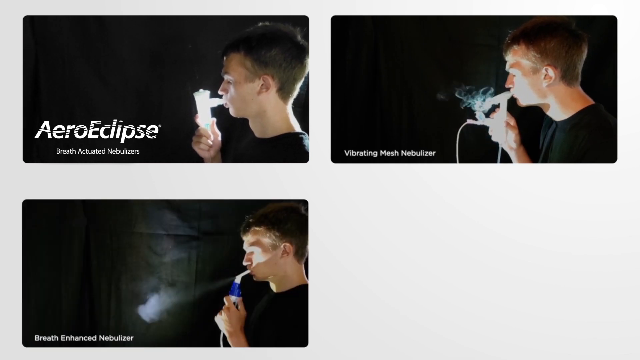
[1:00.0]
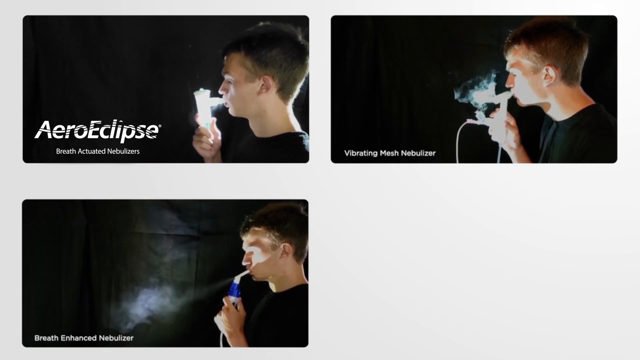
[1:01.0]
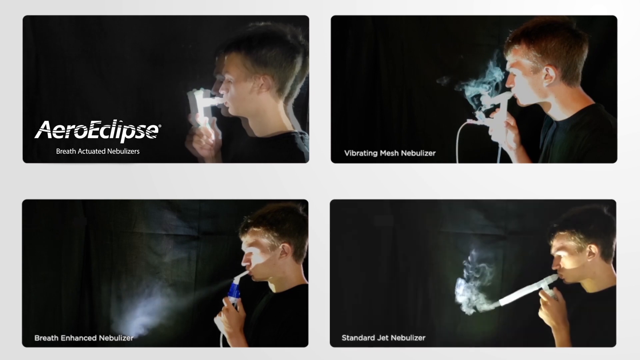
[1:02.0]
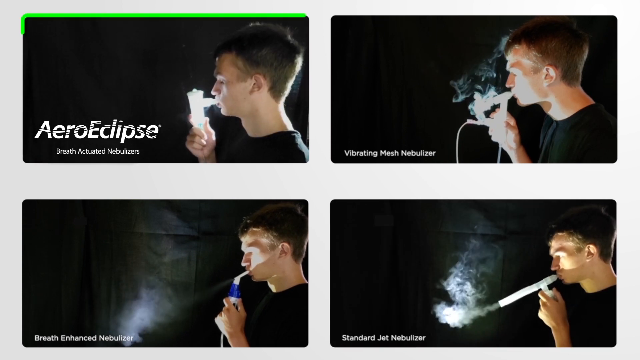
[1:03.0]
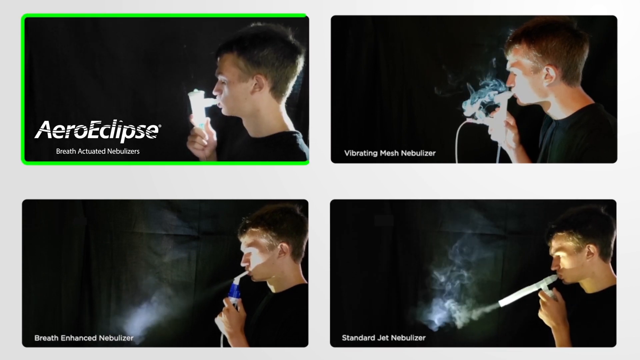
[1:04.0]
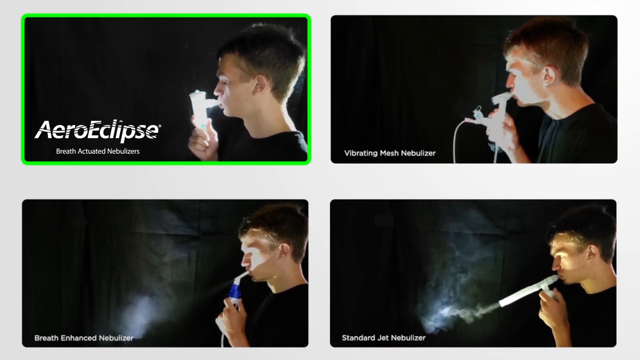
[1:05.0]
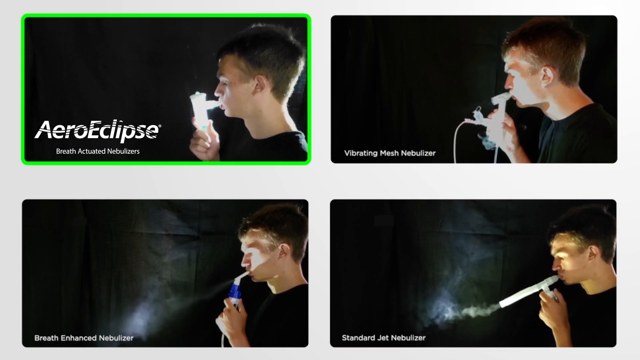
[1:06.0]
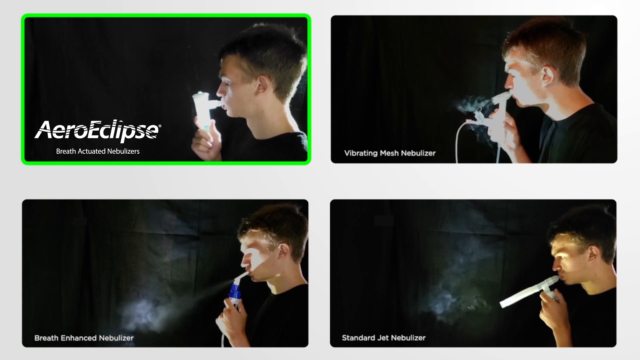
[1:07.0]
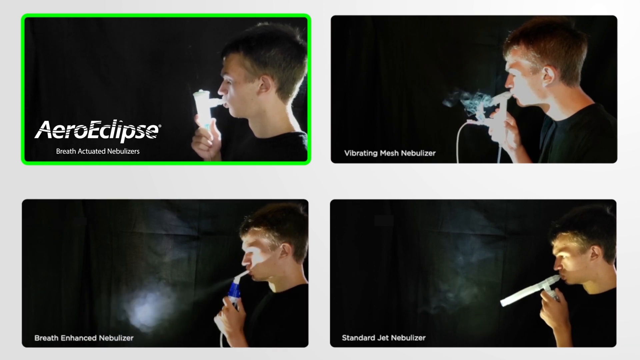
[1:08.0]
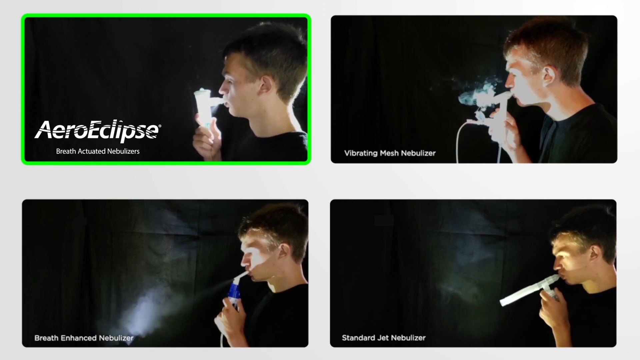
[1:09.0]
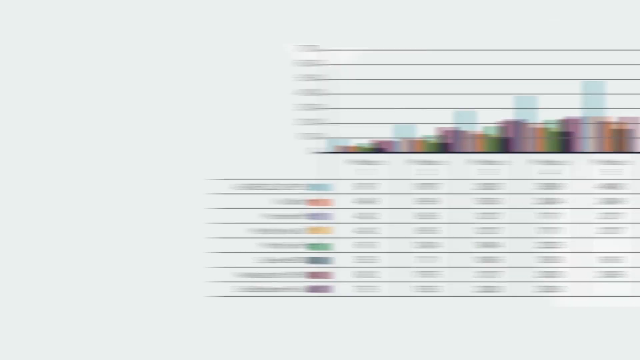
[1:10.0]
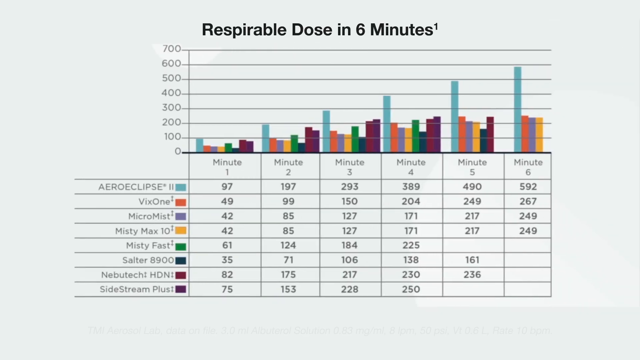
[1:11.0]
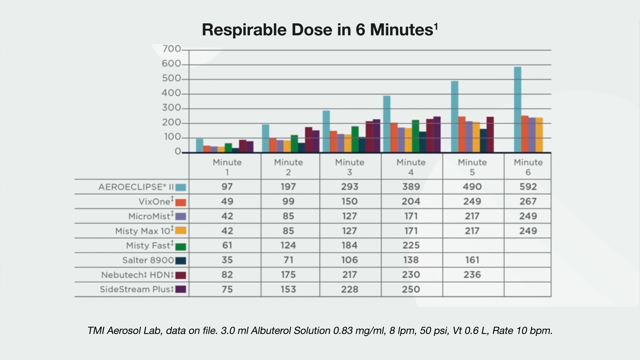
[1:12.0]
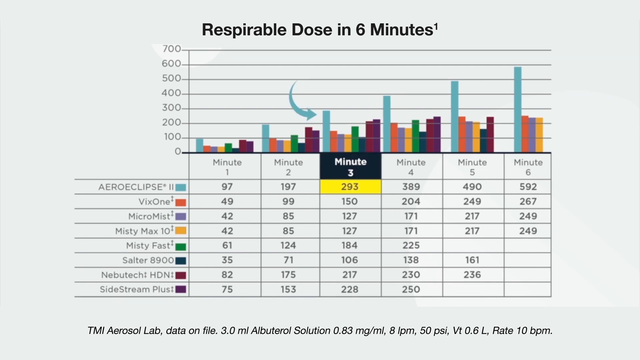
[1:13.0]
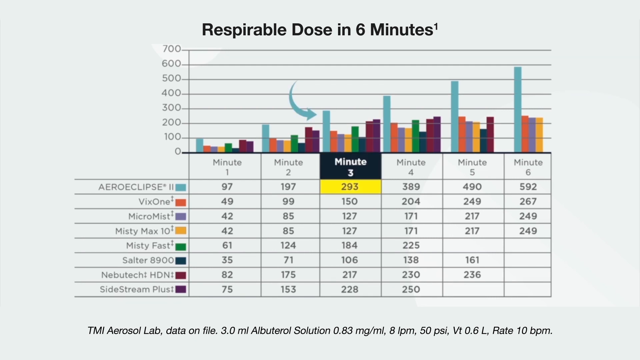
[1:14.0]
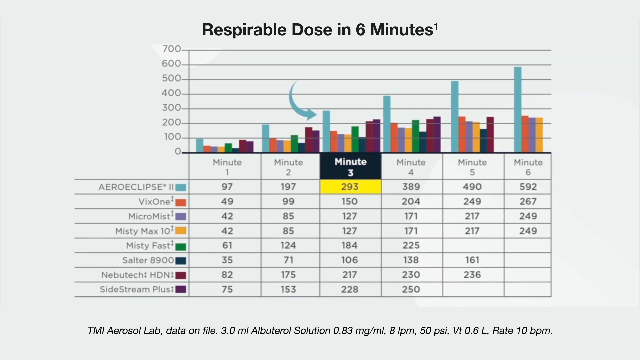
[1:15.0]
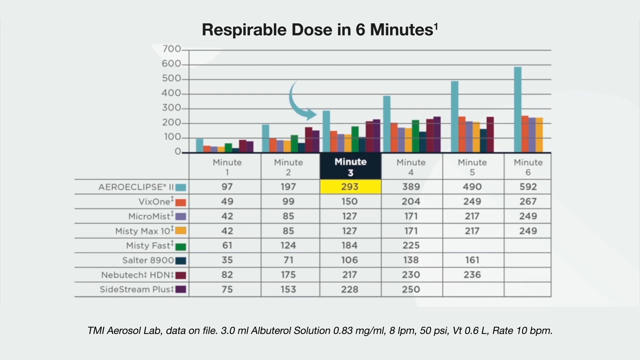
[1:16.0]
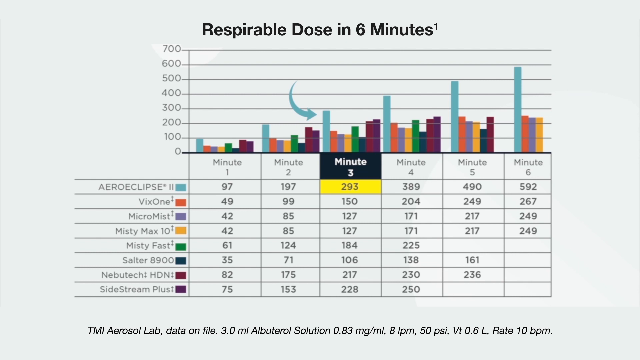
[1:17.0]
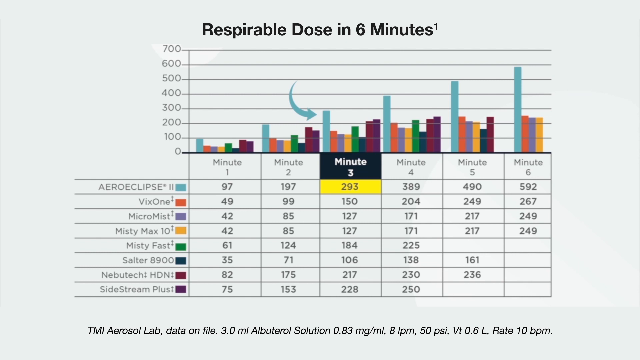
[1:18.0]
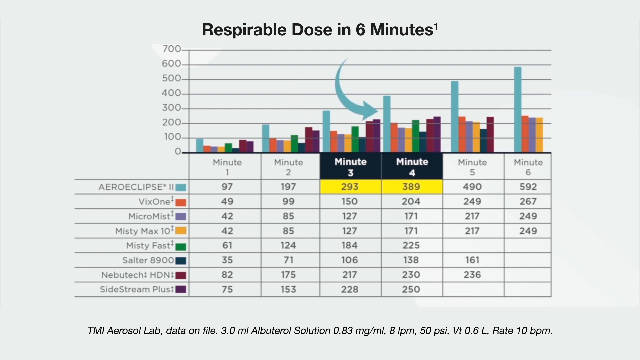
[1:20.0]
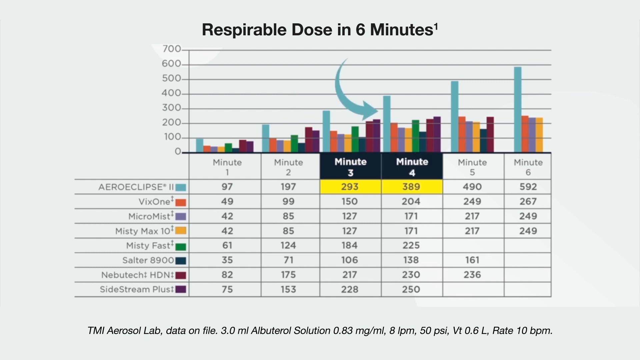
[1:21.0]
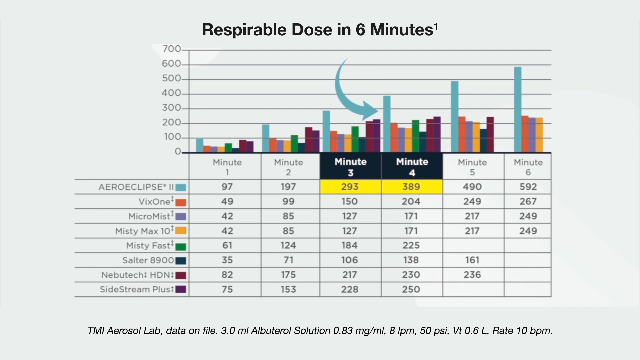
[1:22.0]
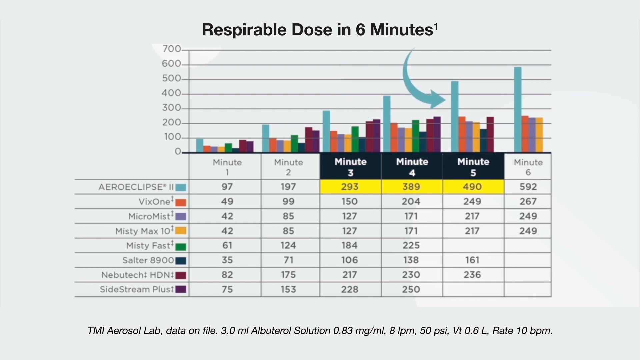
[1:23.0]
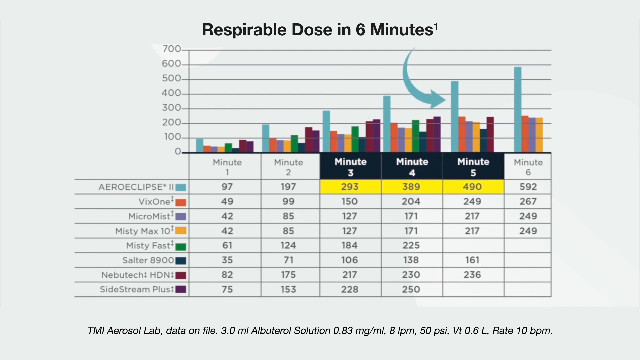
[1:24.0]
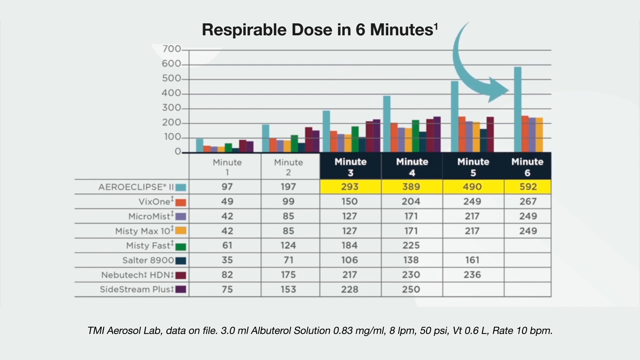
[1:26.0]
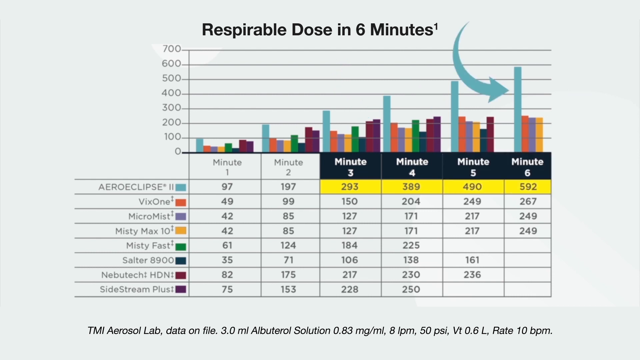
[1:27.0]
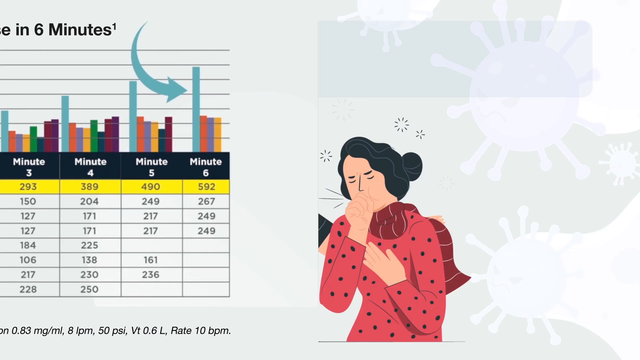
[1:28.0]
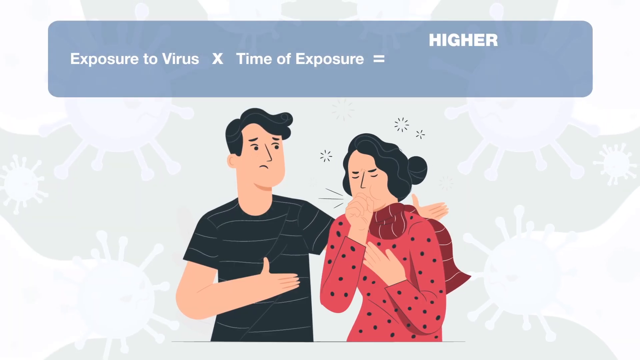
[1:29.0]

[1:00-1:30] Pictures of the different kinds of nebulizers are shown: breath actuated, vibrating mesh, breath enhanced, and standard jet nebulizers. Then a chart titled "respirable dose in six minutes" appears. For the Arrow Eclipse two, the values are 97 at minute one, 197 at minute two, 293 at minute three, 389 at minute four, 490 at minute five, and 592 at minute six. For VIX one, they are 49, 85, 127, 171, 217 and 249 for minutes one through six. The Micro Mist and the Misty Max 10 have exactly the same numbers: 42 at one minute, 85 at two, 127 at three, 171 at four, 217 at five, and 249 at six. The Misty Fast shows 61 at one minute, 124 at two, 184 at three, and 225 at four, and does not go up to six minutes. The Salter 8,900 shows 35 at one, 71 at two, 106 at three, 138 at four, and 161 at five. The Neviatec HDN shows 82 at one, 175 at two, 217 at three, 230 at four, and 236 at five. The Sidestream Plus shows 75 at one, 153 at two, 228 at three, and 250 at four. The video then cuts to a man and a woman; the woman is coughing, and the text says "exposure to virus times time of exposure equals", with the word "high" on top of a box reading "higher likelihood of infection".